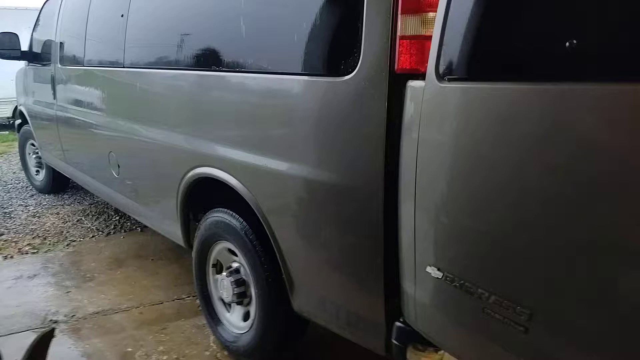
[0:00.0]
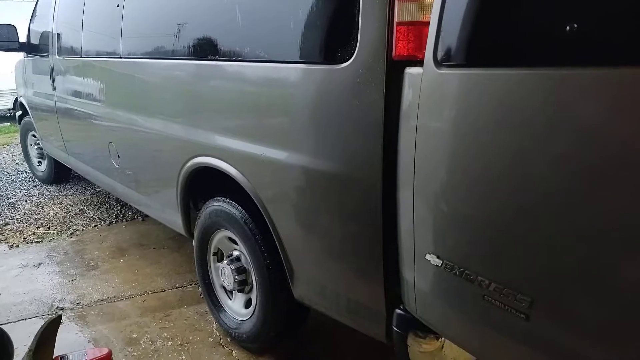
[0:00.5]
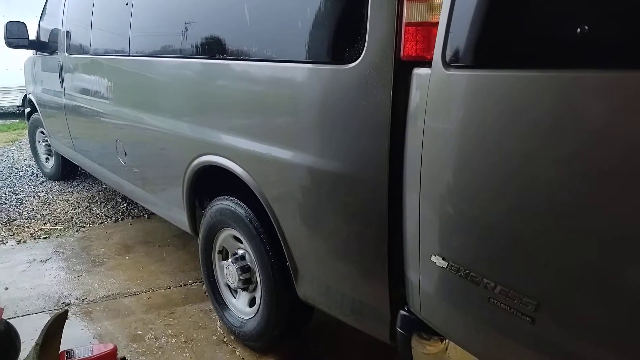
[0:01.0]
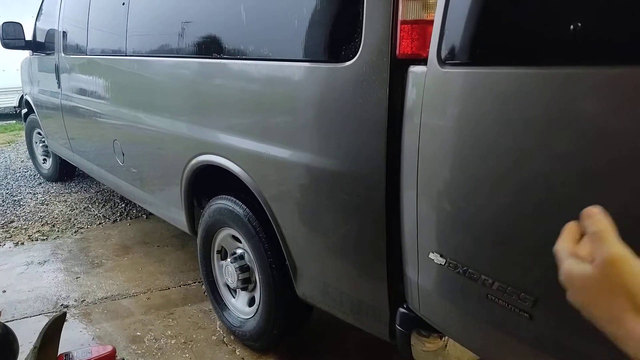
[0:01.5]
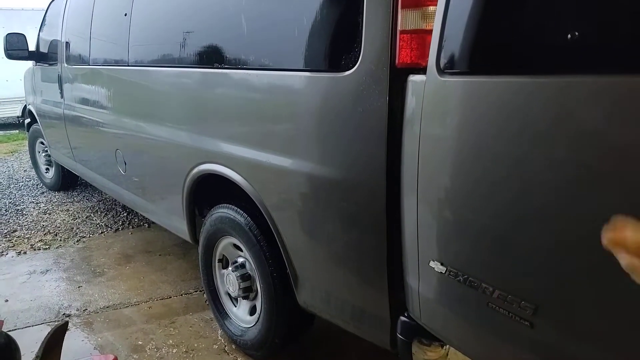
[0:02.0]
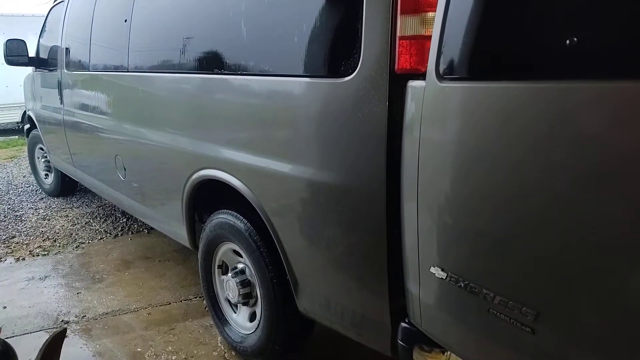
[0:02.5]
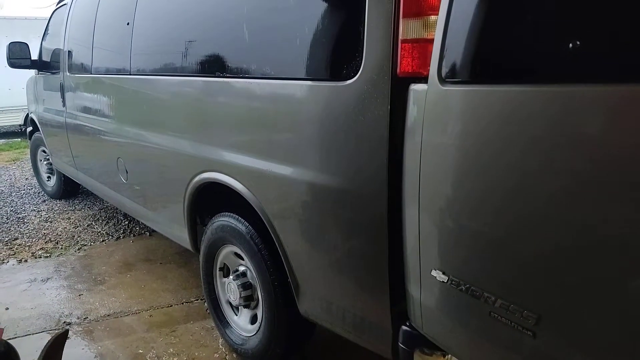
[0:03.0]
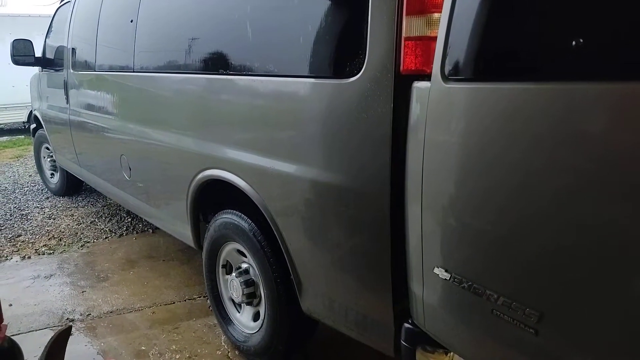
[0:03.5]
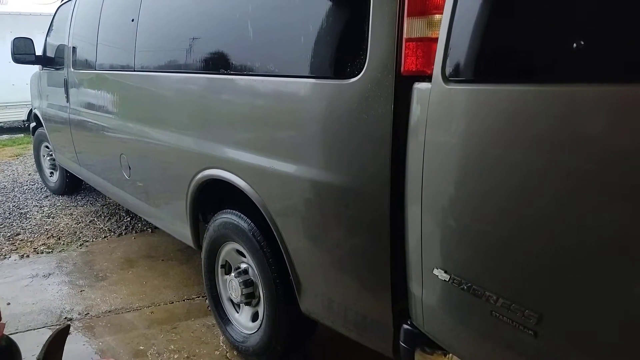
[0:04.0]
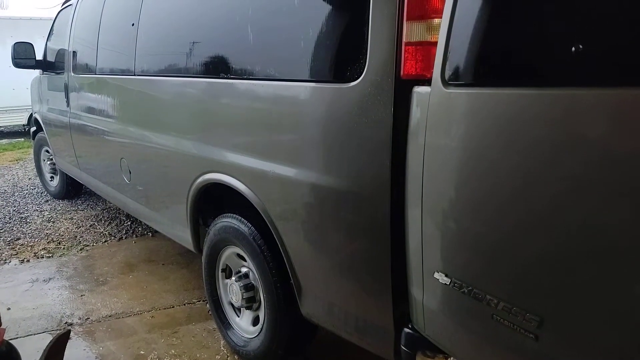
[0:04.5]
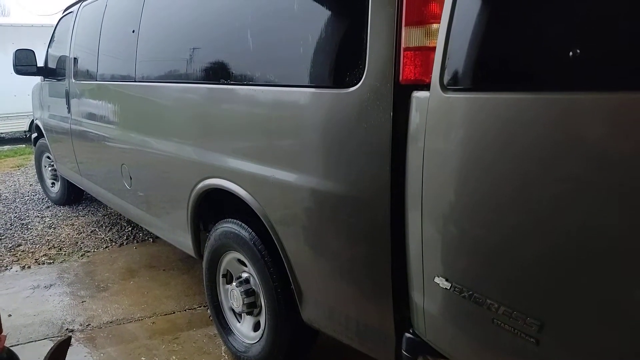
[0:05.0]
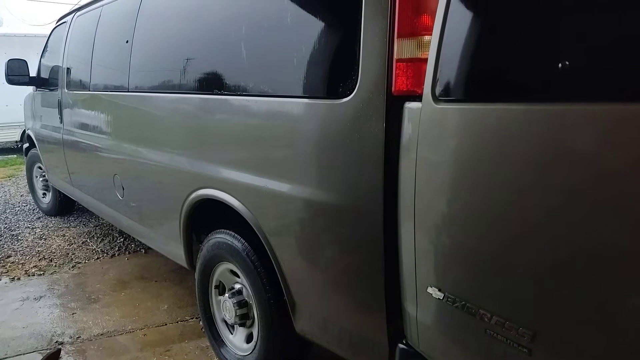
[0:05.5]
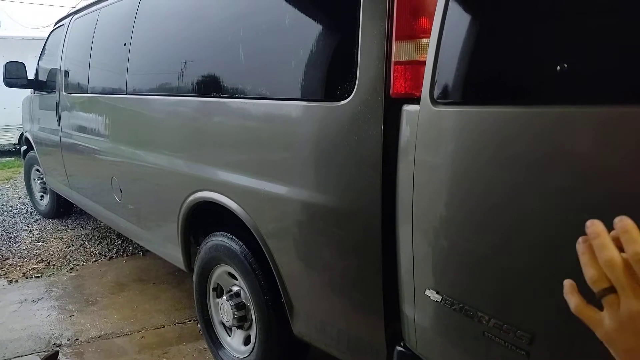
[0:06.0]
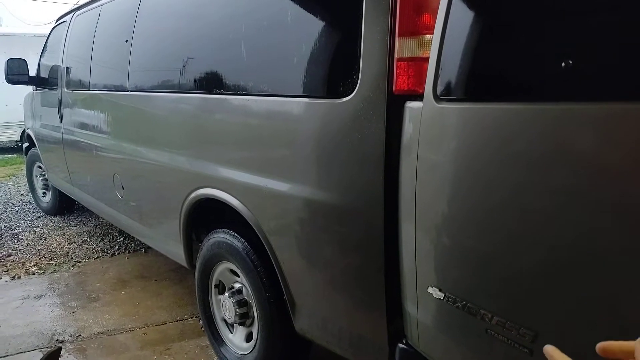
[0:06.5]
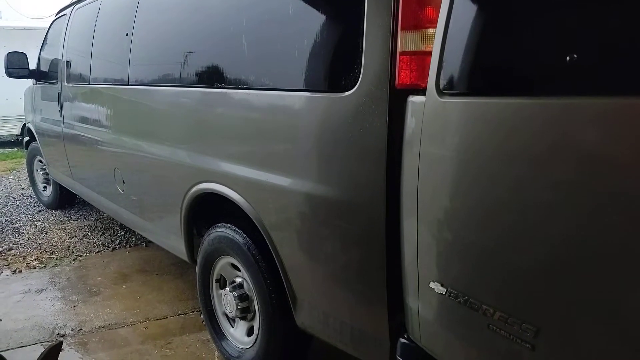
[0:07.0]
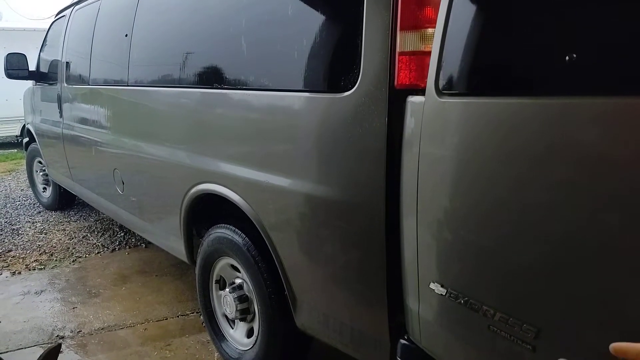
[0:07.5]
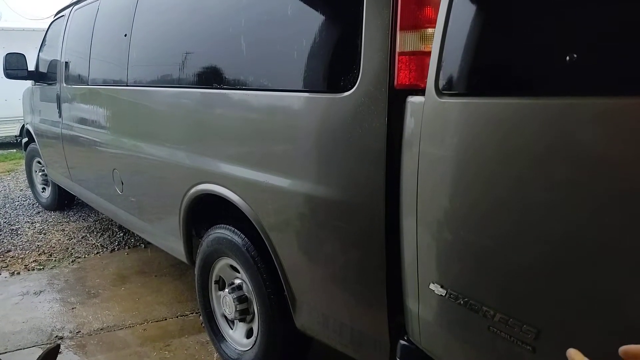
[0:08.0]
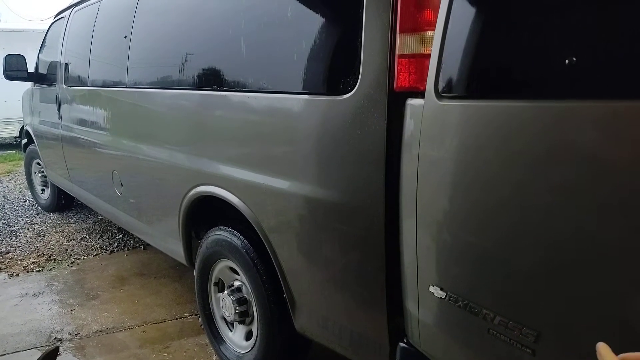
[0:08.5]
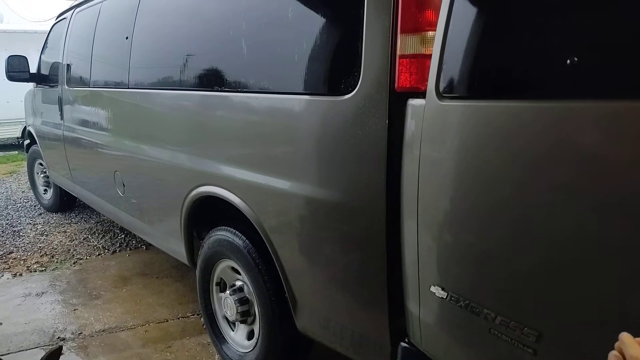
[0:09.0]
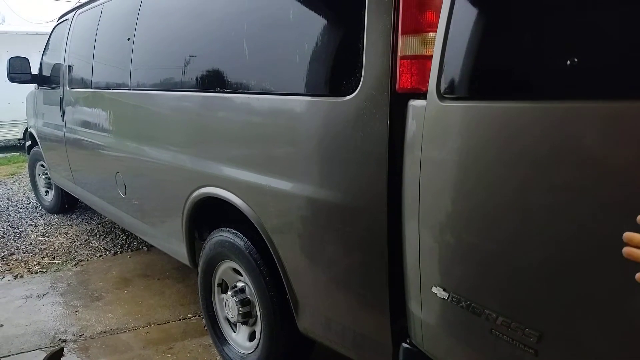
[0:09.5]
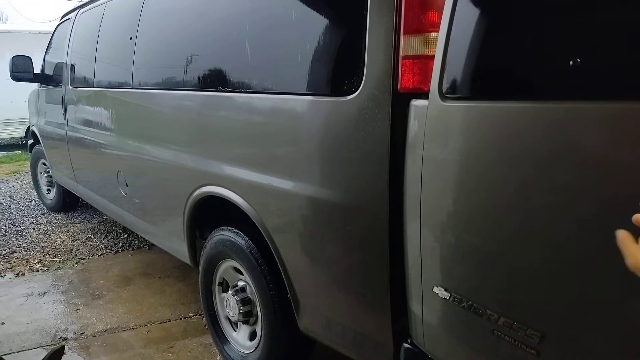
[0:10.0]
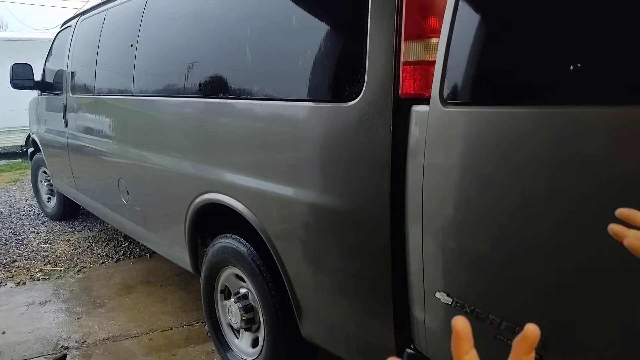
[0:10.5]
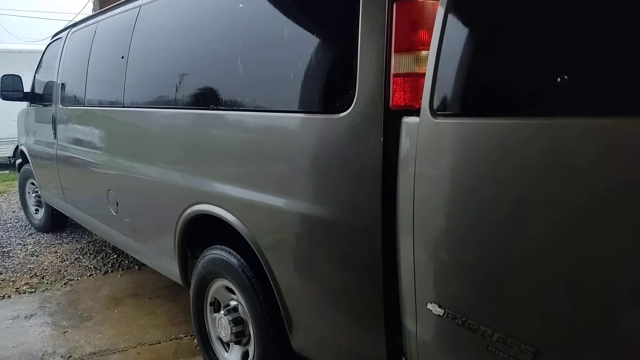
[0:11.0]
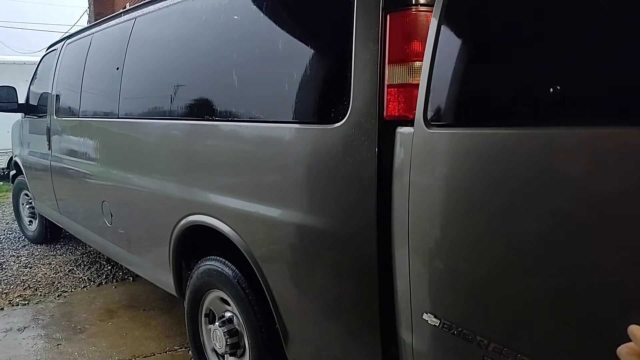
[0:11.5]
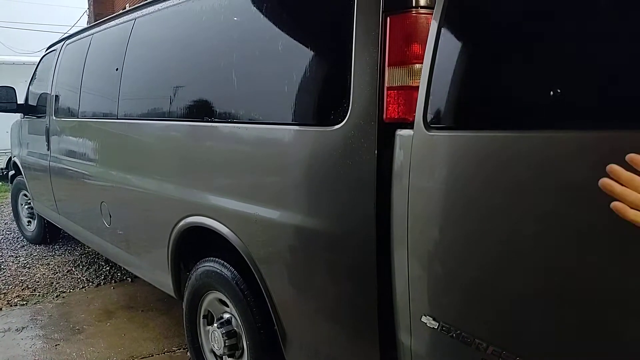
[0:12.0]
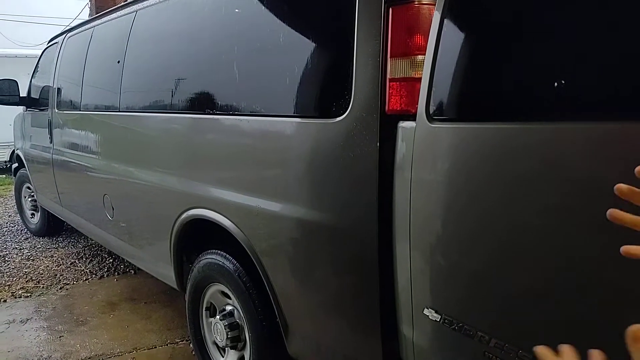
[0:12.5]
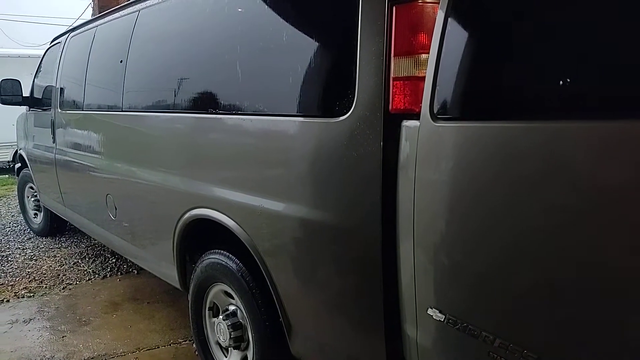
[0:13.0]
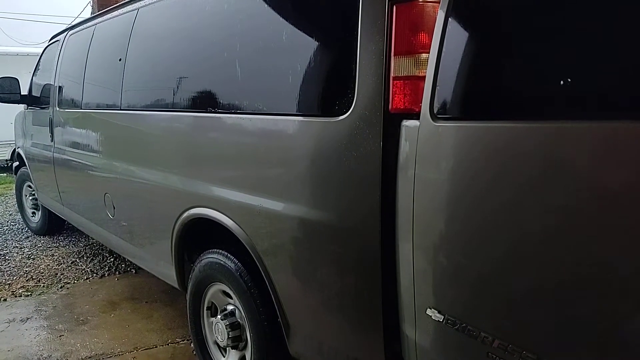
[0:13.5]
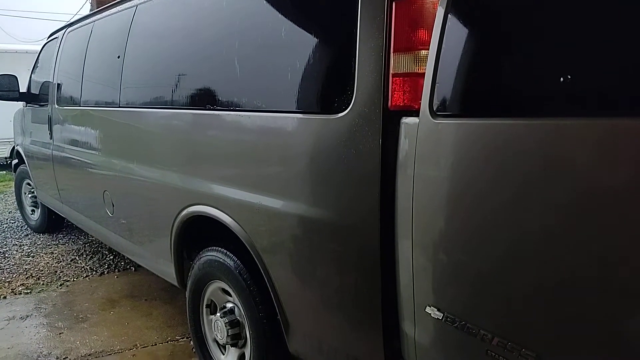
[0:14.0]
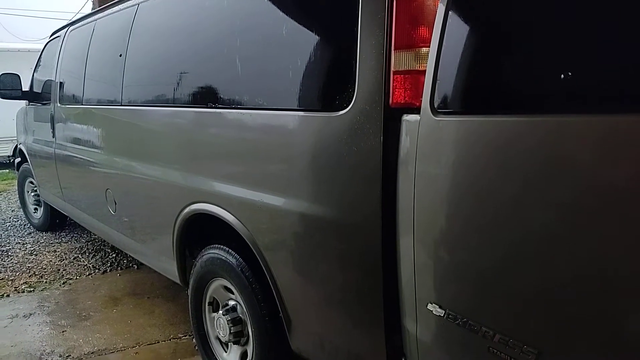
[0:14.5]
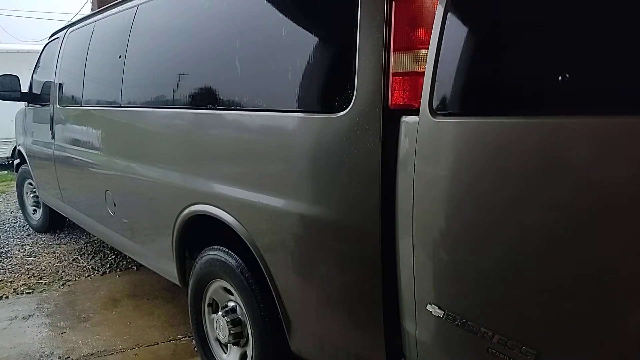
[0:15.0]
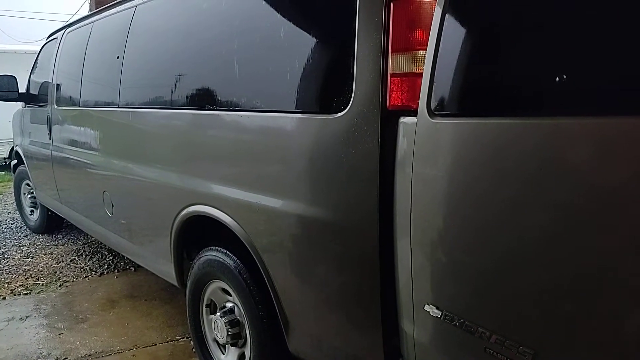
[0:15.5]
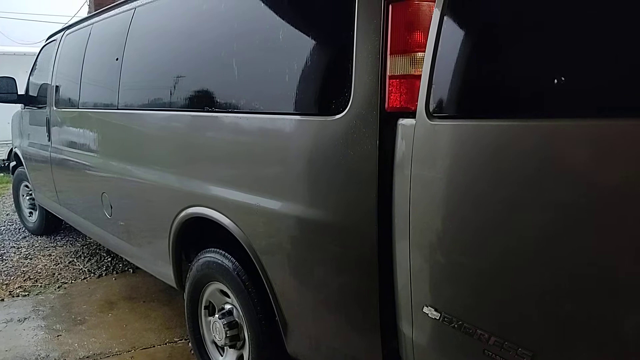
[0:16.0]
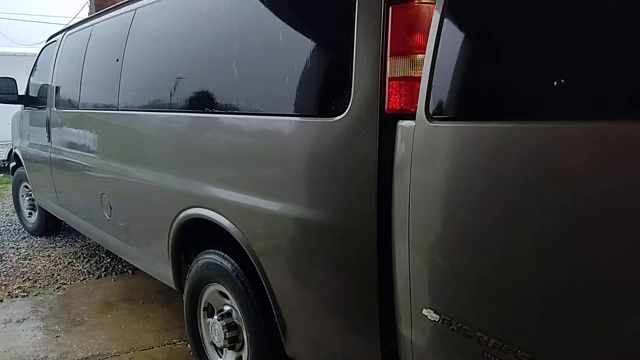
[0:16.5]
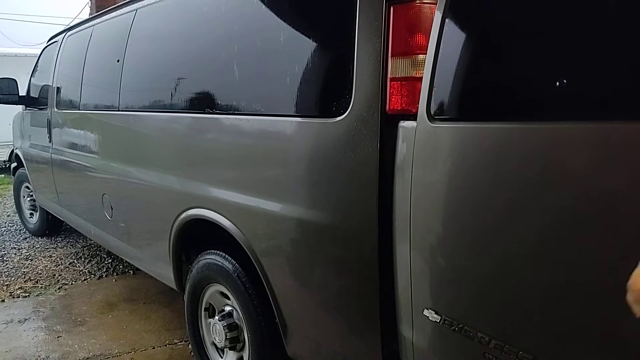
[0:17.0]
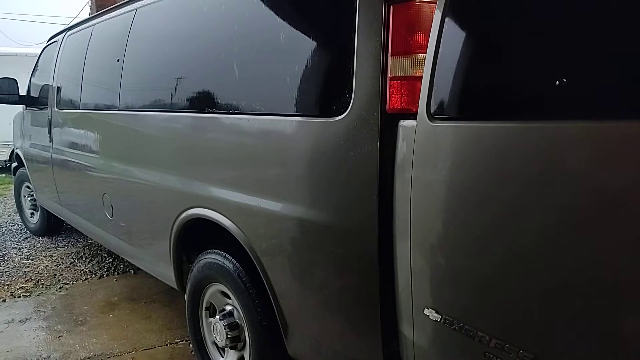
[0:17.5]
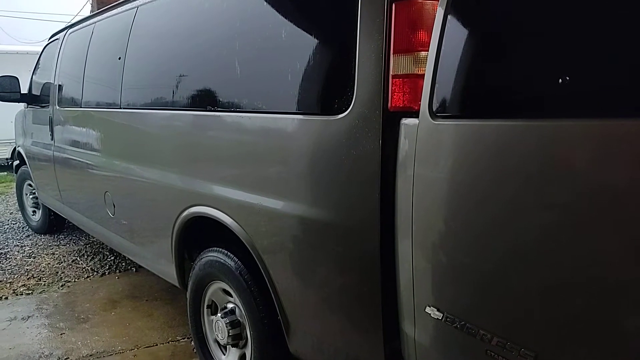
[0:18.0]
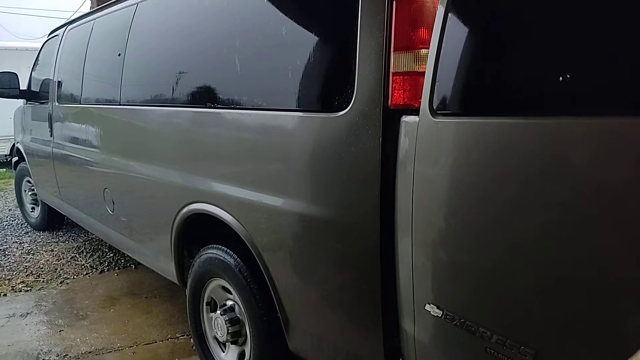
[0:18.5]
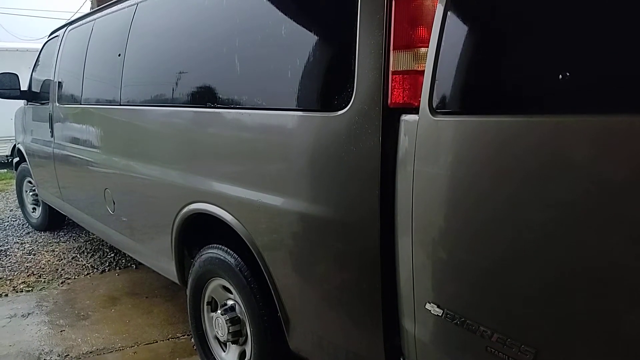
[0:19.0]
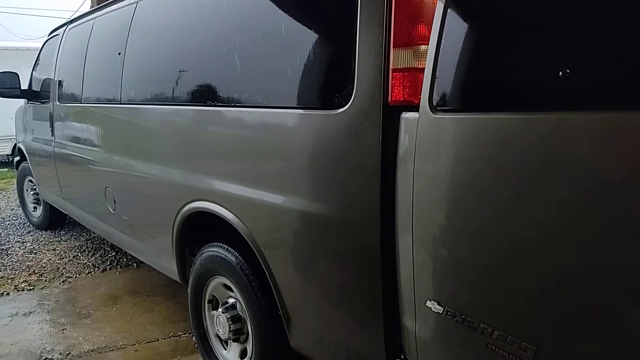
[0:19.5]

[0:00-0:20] Most of the screen is taken up by the left-hand side of a grey minivan, most probably a people carrier since it has windows down the length of the vehicle. The windows look dark tinted, and the rear window, only partially visible, is also tinted. The minivan has black tyres and silver alloy wheels and is parked on hard standing: the rear wheels are on a paved area and the front wheels are on a pebbled area. In front of the minivan a small glimpse of grass is just visible. The left-hand door is open, and somebody is standing behind the minivan; their hands come into view, moving as if they are talking. The shot, taken from approximately eye level, stays on the side of the minivan with the hands moving in an animated way.